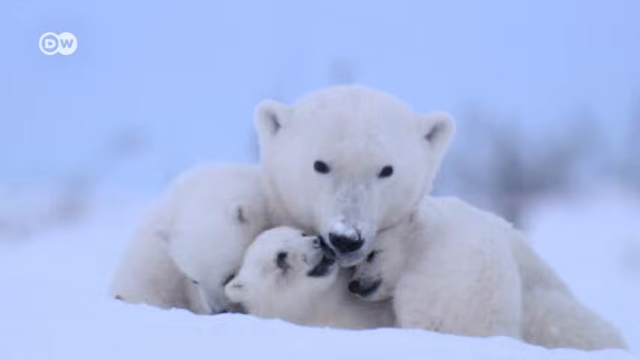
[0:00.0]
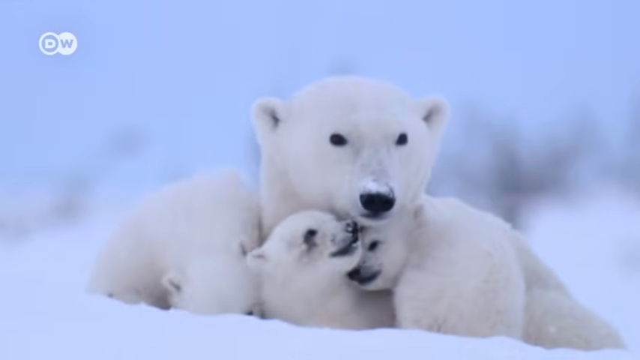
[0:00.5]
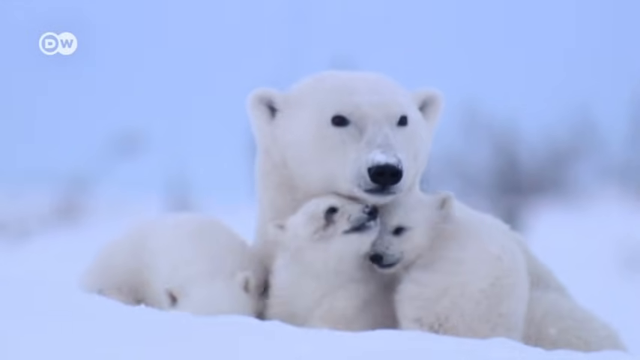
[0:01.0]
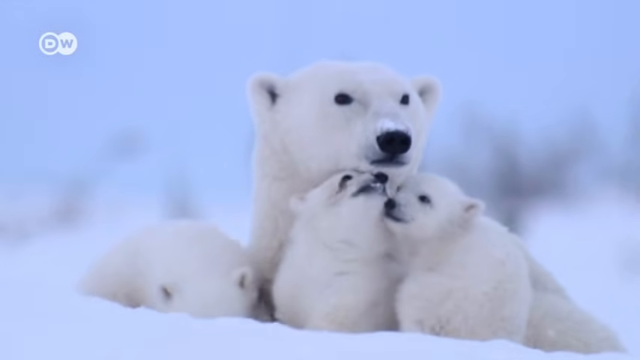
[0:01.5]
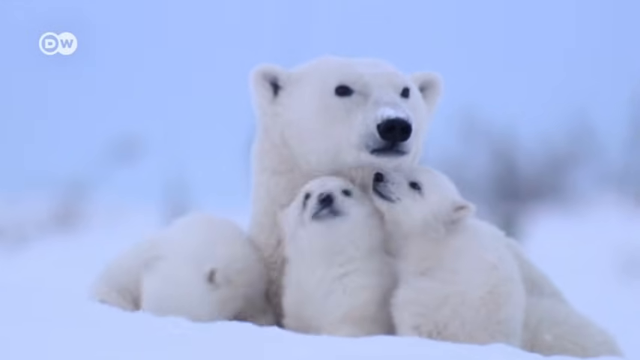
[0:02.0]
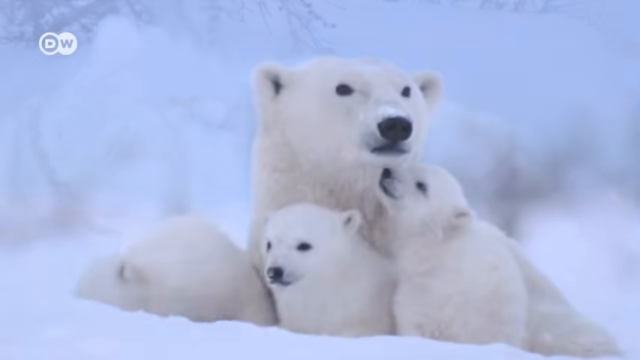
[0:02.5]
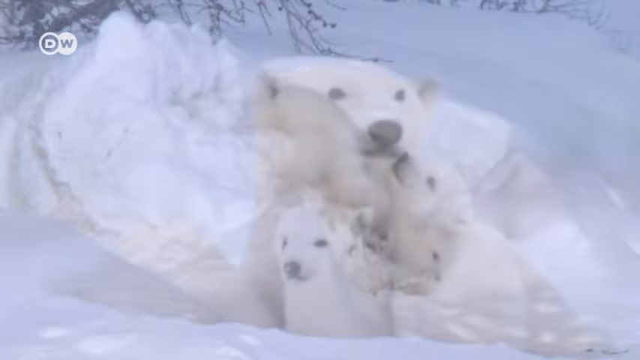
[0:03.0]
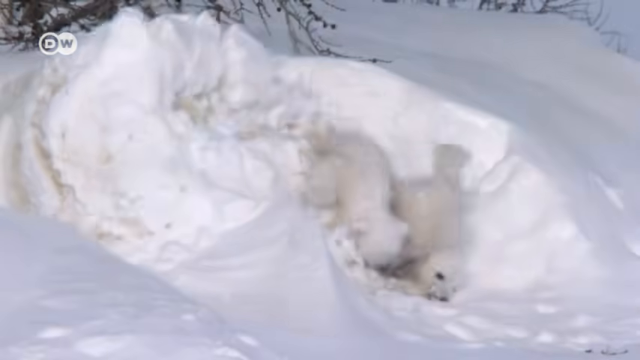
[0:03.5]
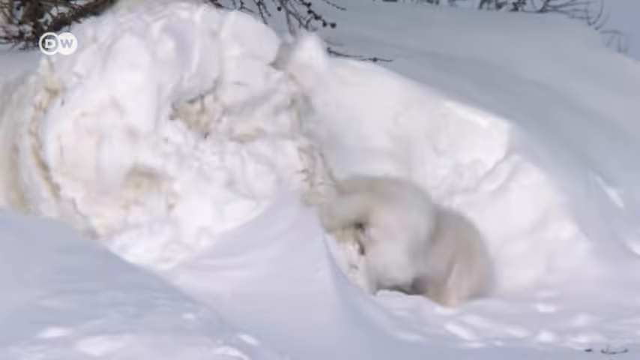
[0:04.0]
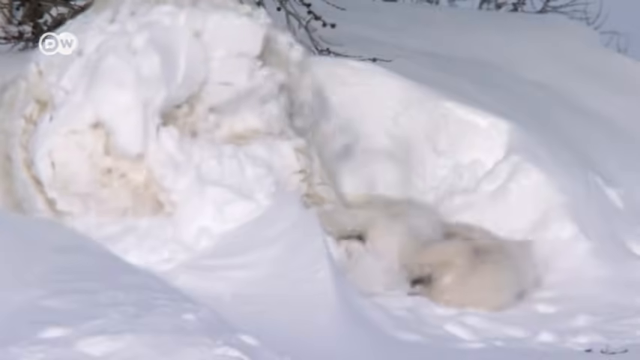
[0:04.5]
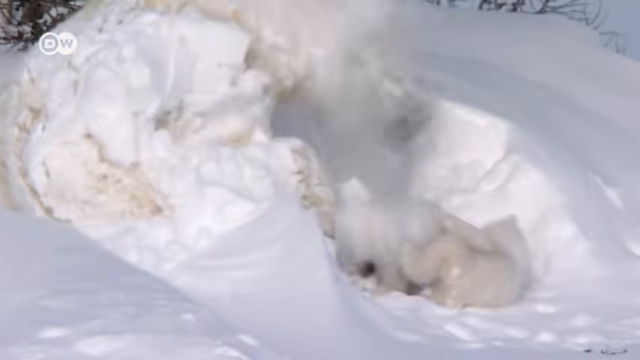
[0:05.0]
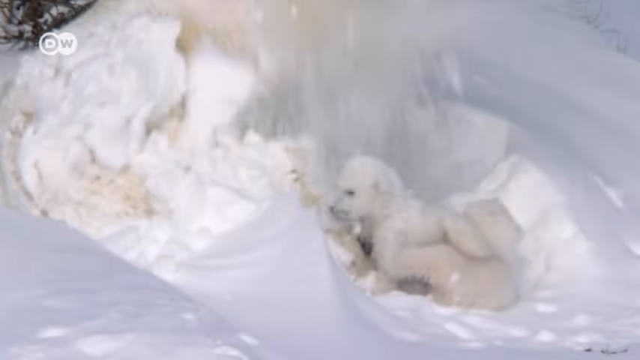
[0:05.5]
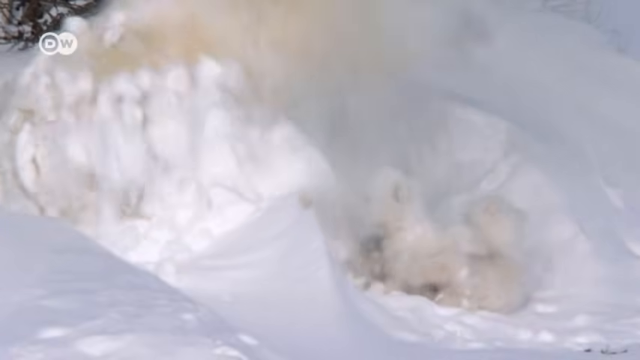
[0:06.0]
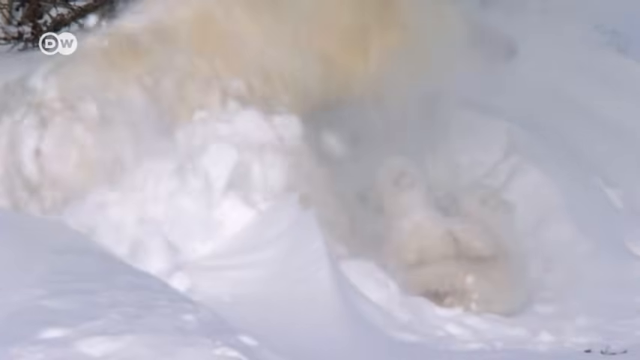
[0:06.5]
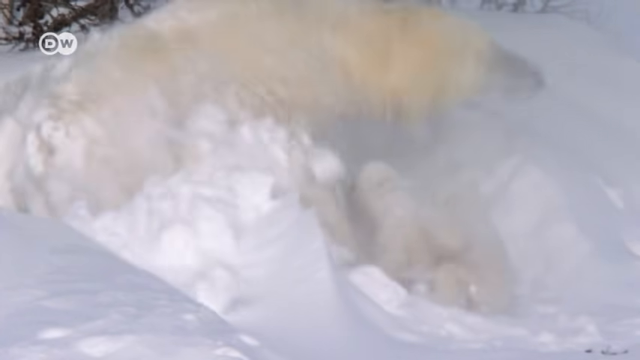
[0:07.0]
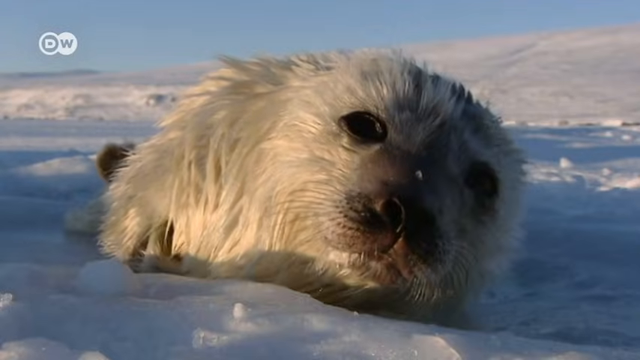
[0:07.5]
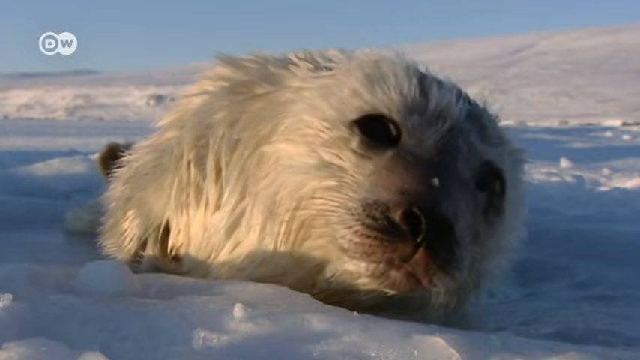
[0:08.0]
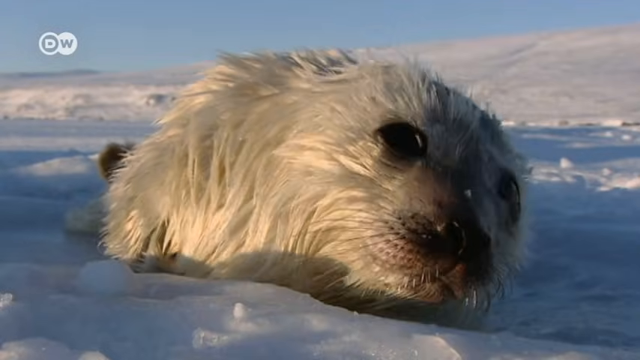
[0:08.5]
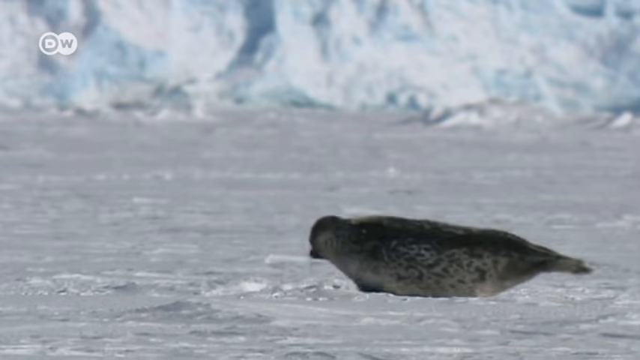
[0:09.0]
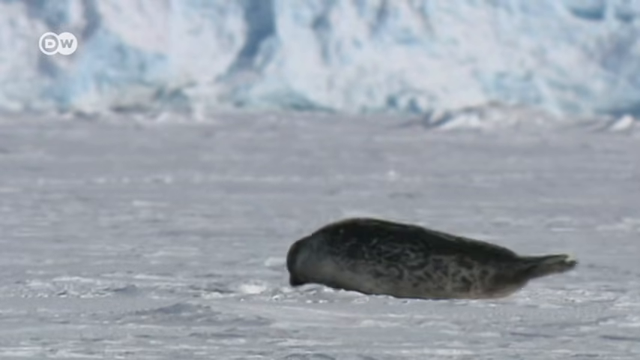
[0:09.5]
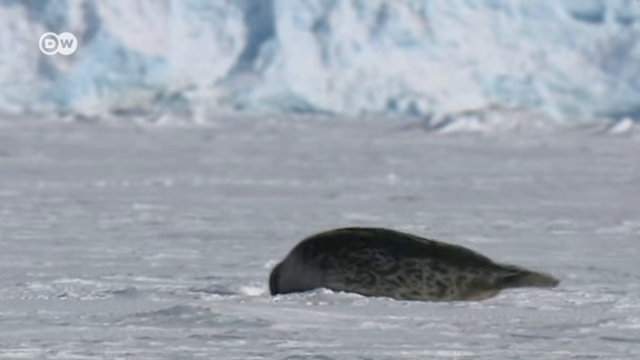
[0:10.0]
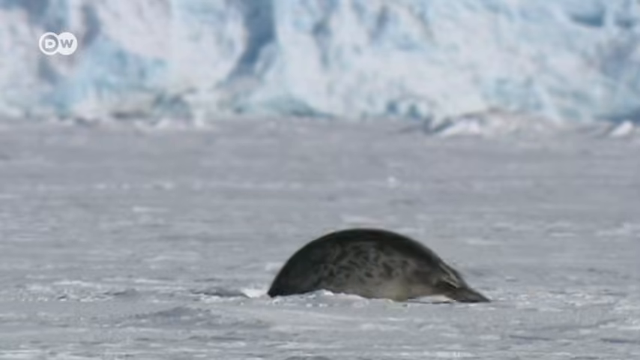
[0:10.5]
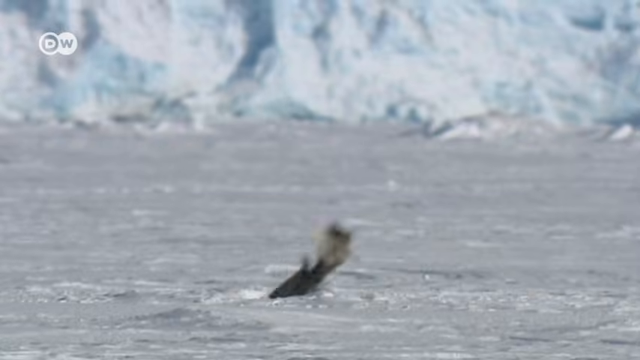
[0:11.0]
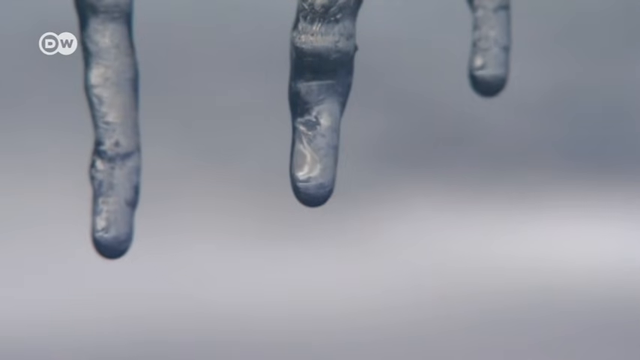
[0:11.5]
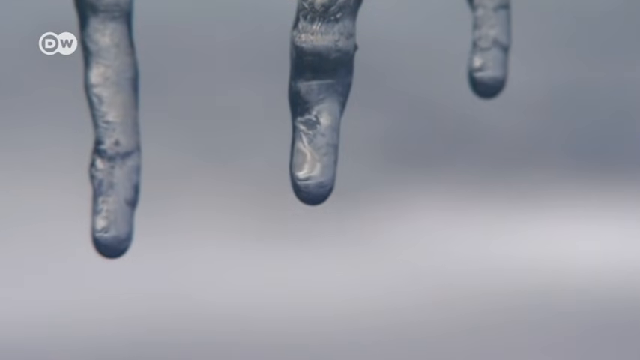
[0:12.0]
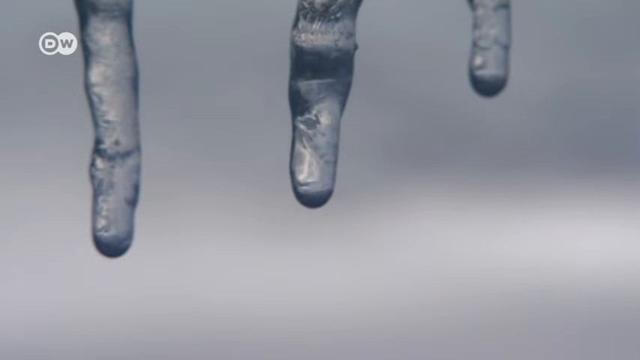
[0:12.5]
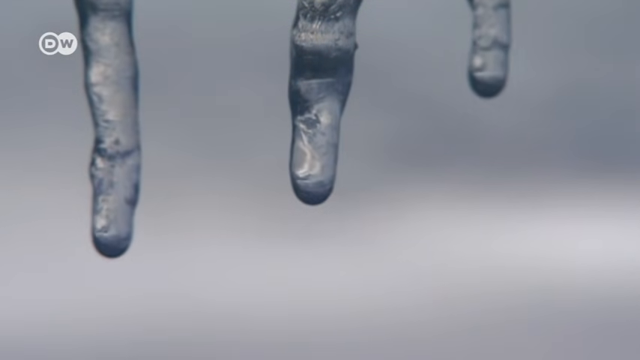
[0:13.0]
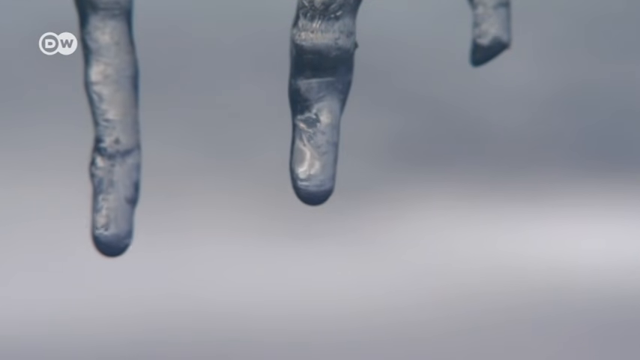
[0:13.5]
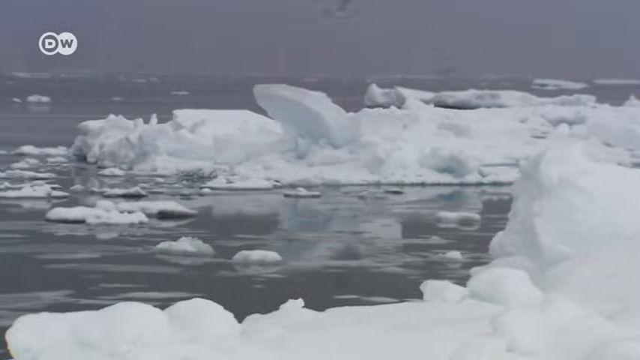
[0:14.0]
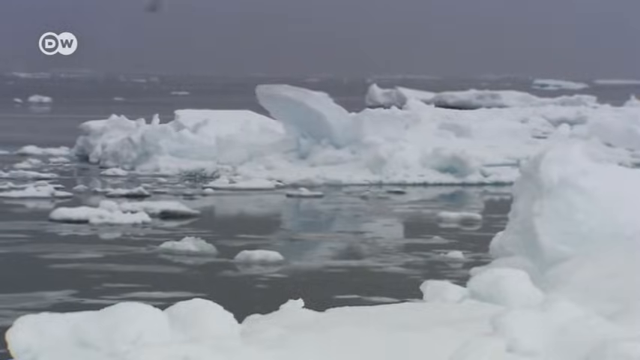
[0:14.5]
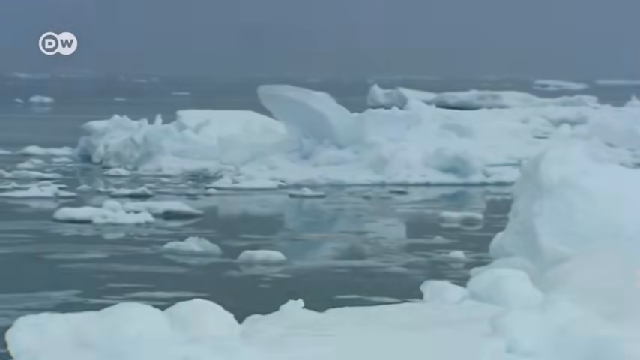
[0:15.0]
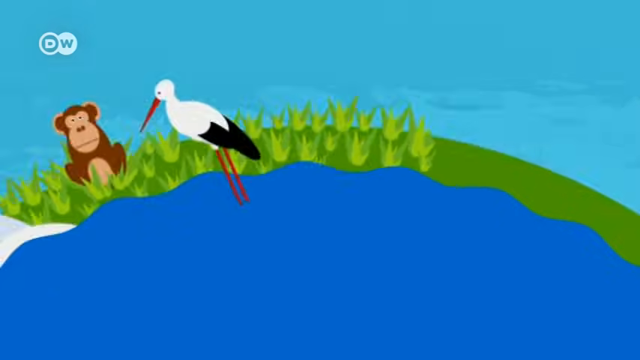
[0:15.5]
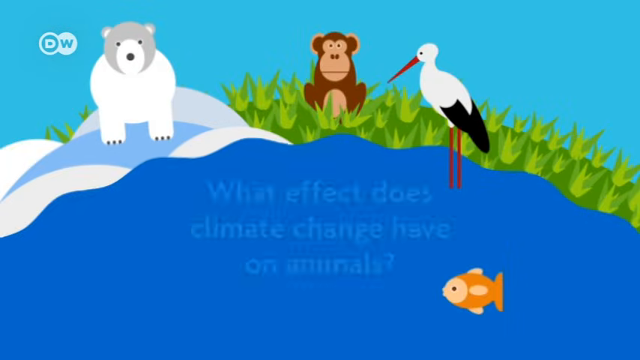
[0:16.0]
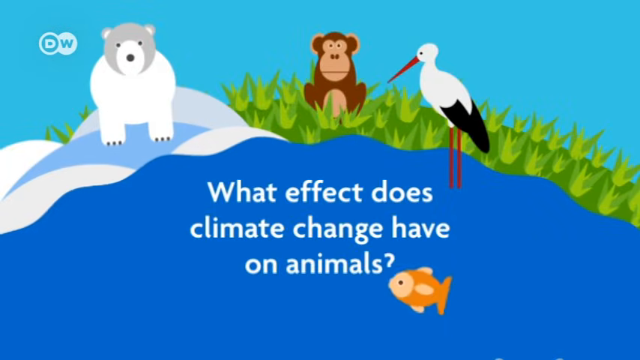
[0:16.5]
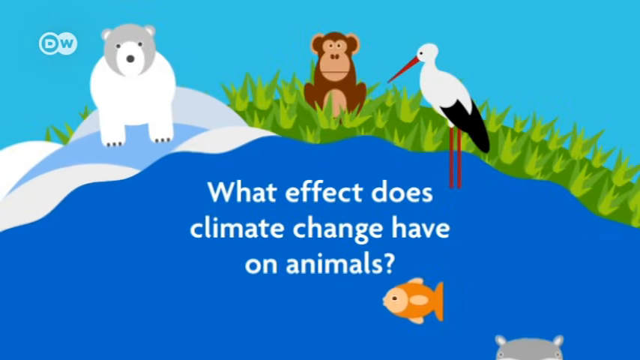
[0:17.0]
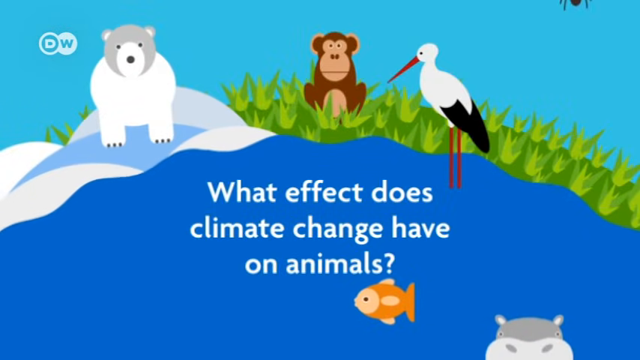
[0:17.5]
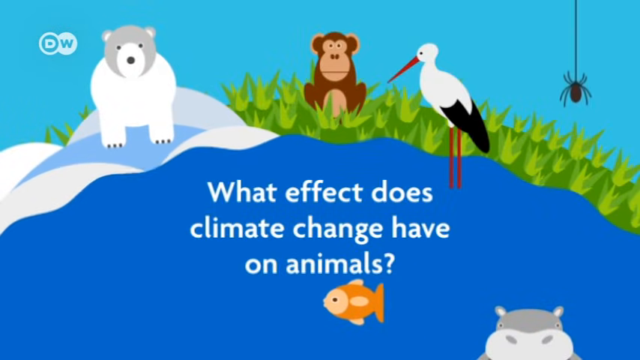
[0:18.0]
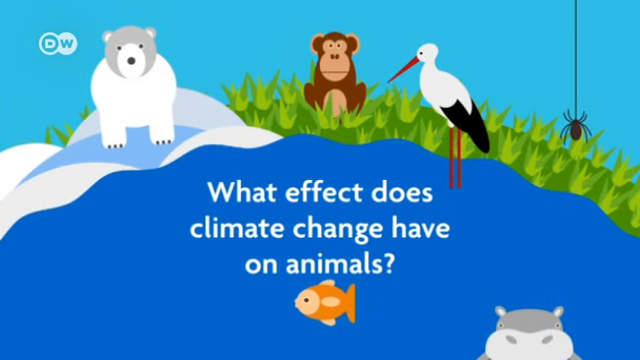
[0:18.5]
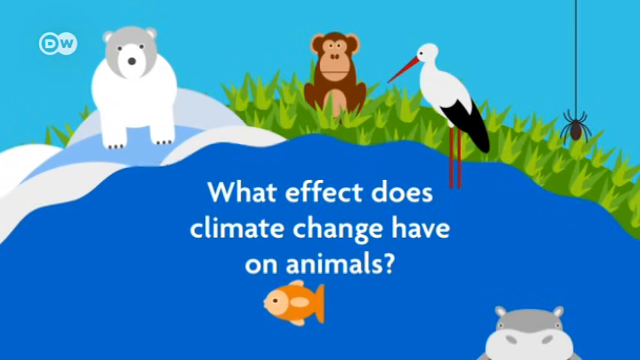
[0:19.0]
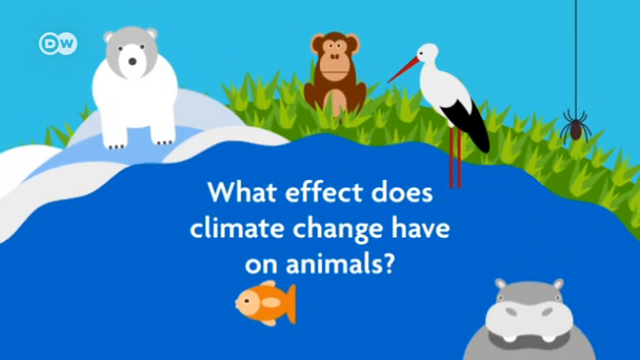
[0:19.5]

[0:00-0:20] A polar bear and her three cubs cuddle with each other in the snow. The little cub seems to be licking the mother bear, and then all of them play in the snow, hiding beneath it and coming back out. Next, a very cute baby seal appears, its fur seemingly all wet. An adult seal is laying on an iceberg and then jumps down into the freezing water below. The camera moves to a scene of melting ice, where a droplet falls to the ground. An overview picture follows of either the North Pole or Antarctica, showing the iceberg and freezing ice water. Next comes an animated screen with an animated polar bear, monkey, bird and fish, and the text reads "what effect does climate change have on animals?" A spider falls down from the top of the screen, the fish keeps swimming, and a hippo pops up.